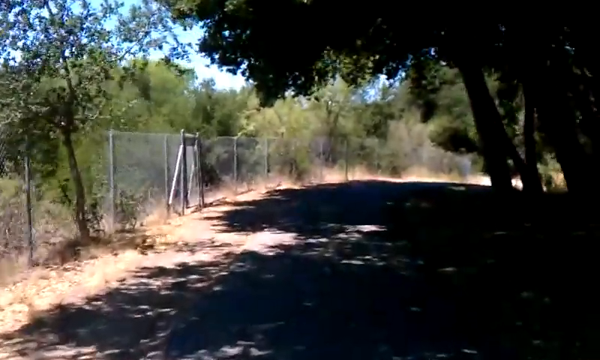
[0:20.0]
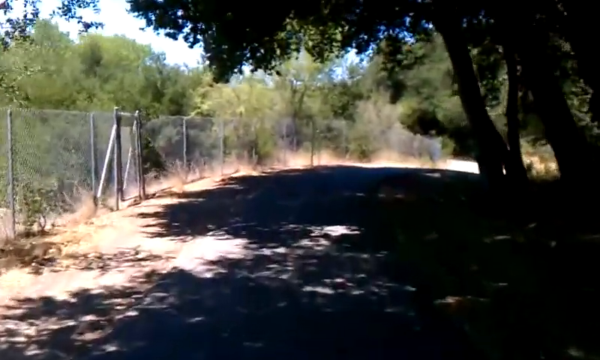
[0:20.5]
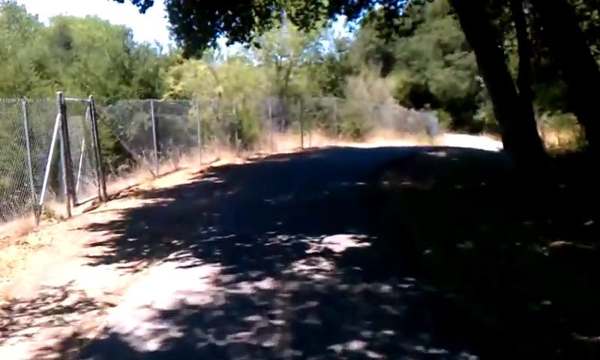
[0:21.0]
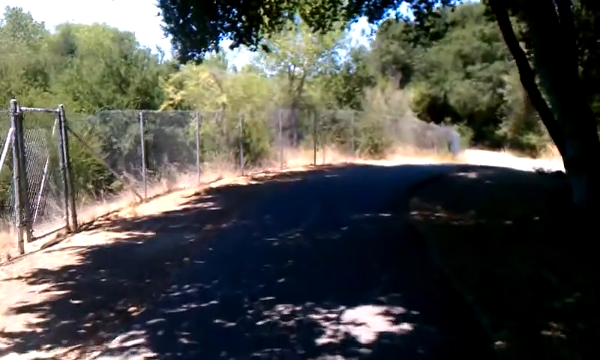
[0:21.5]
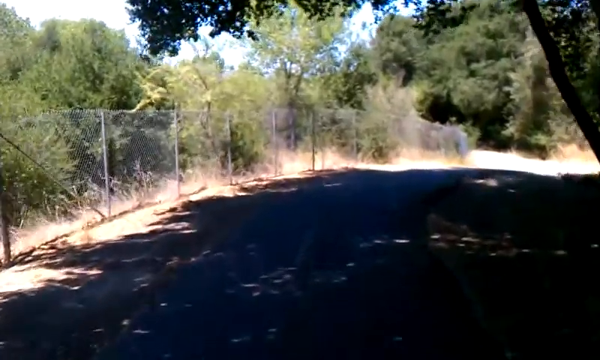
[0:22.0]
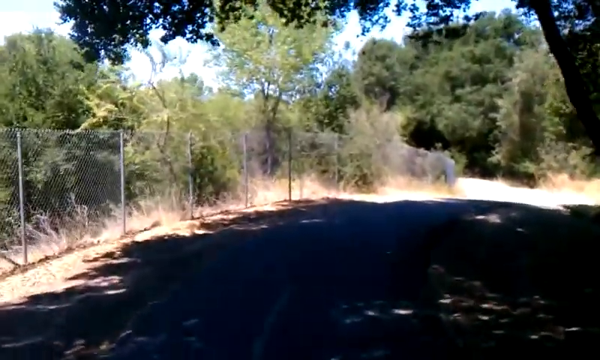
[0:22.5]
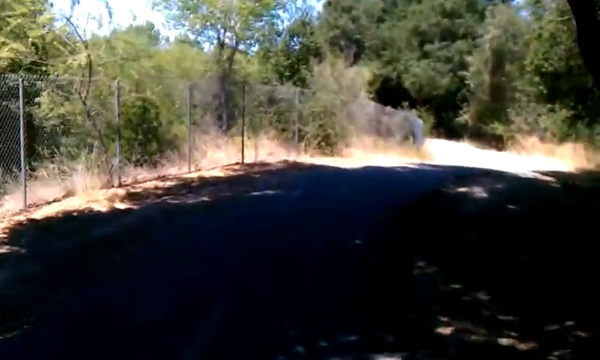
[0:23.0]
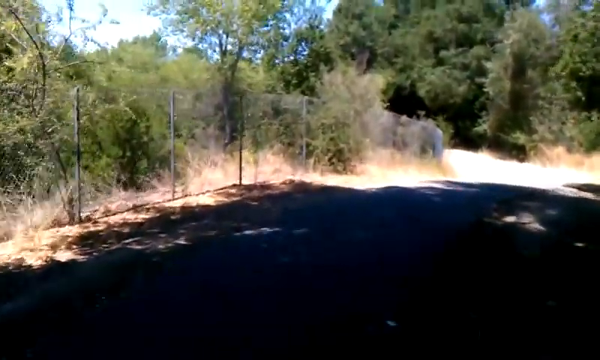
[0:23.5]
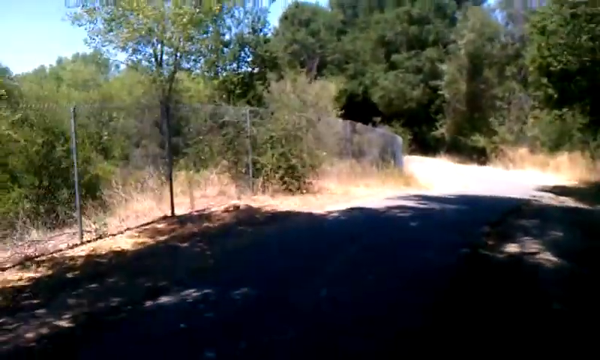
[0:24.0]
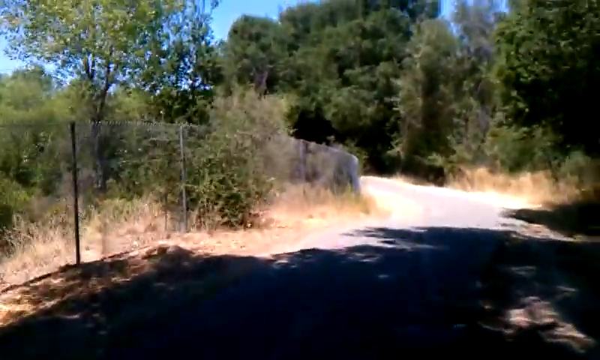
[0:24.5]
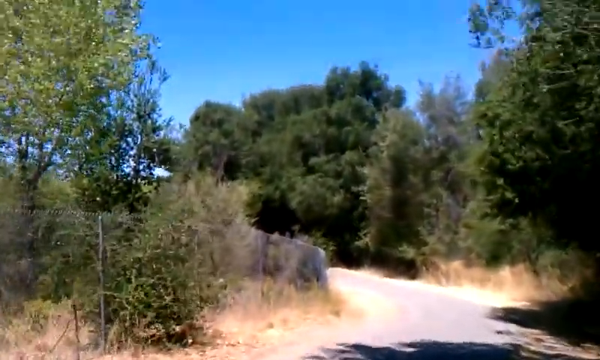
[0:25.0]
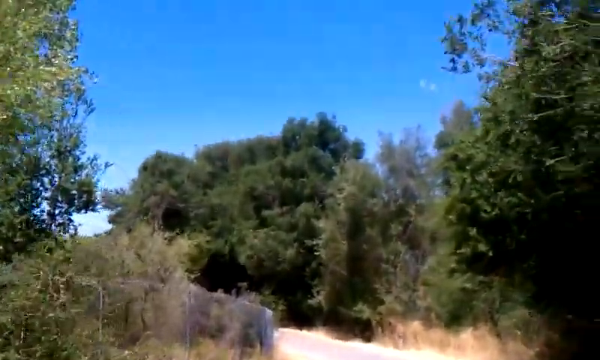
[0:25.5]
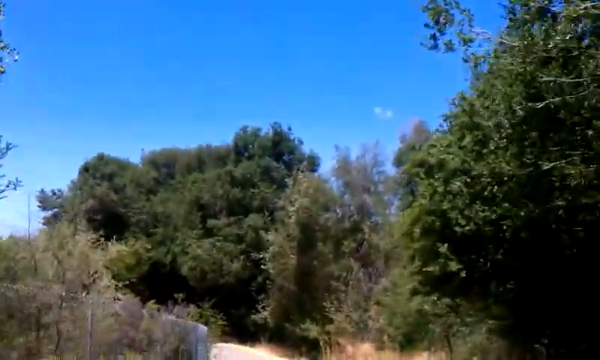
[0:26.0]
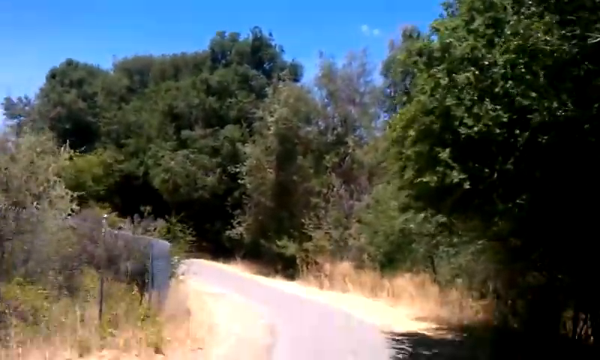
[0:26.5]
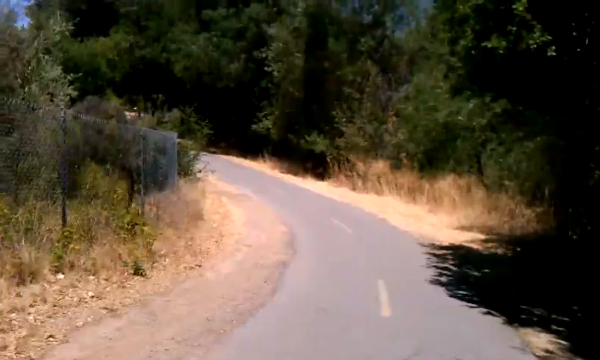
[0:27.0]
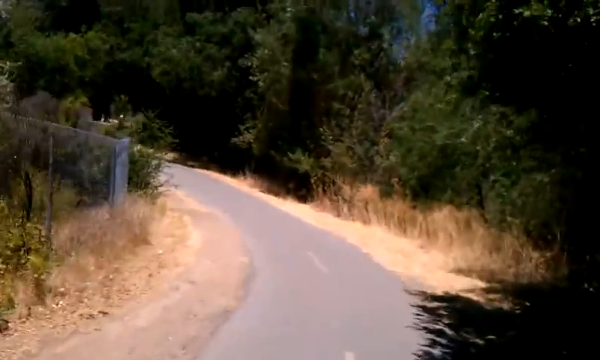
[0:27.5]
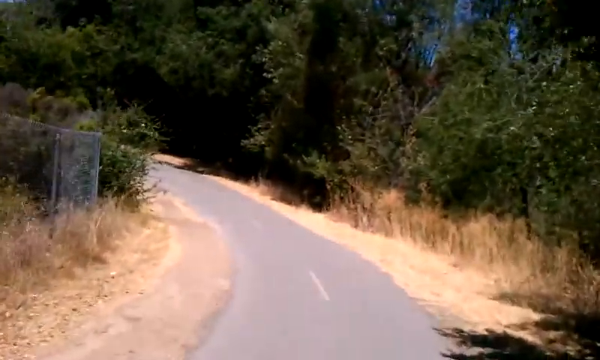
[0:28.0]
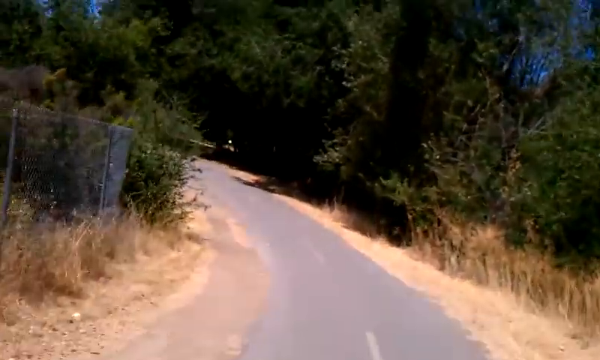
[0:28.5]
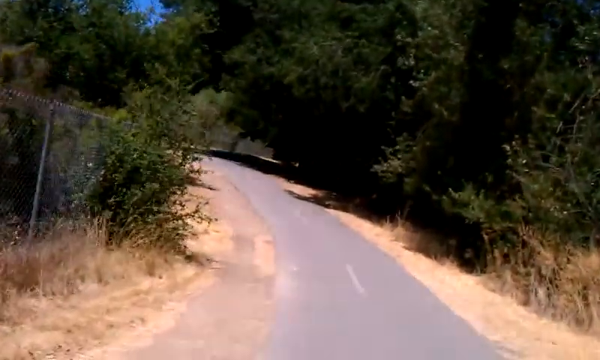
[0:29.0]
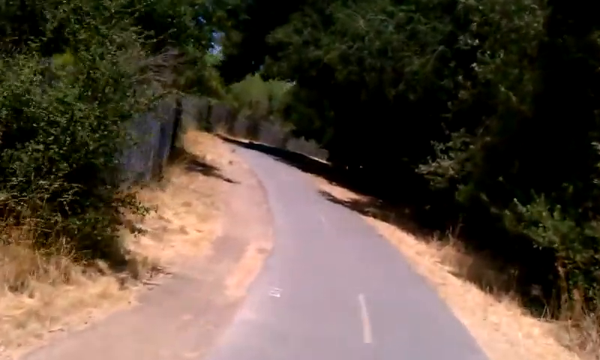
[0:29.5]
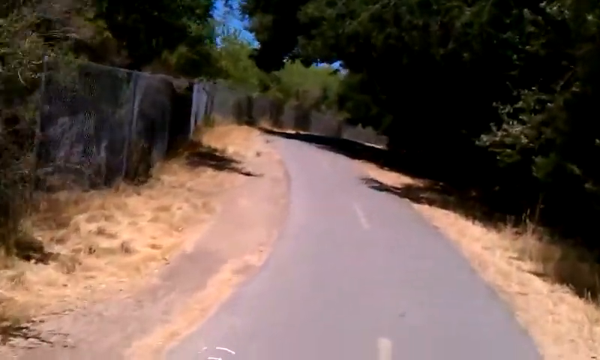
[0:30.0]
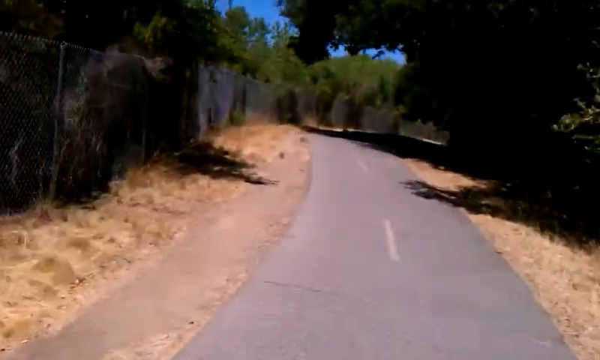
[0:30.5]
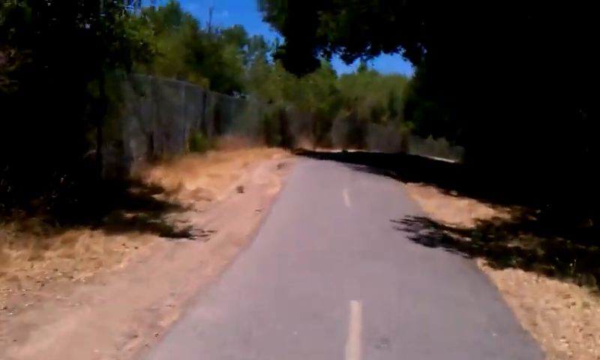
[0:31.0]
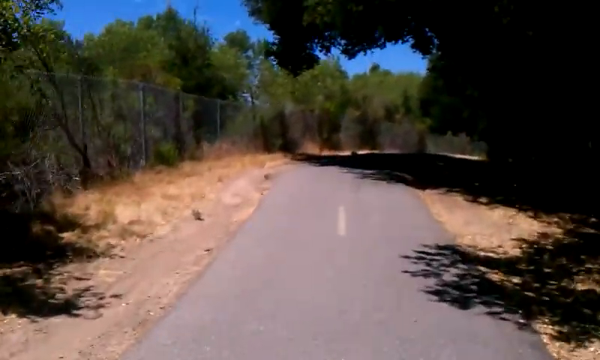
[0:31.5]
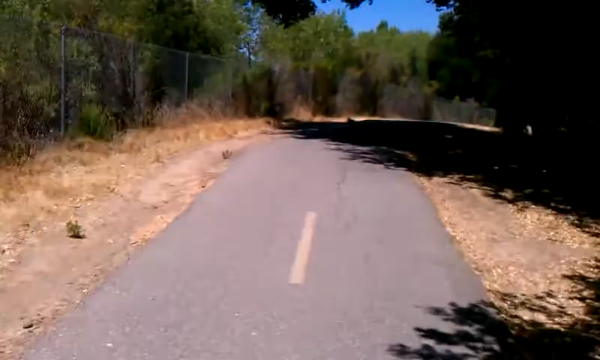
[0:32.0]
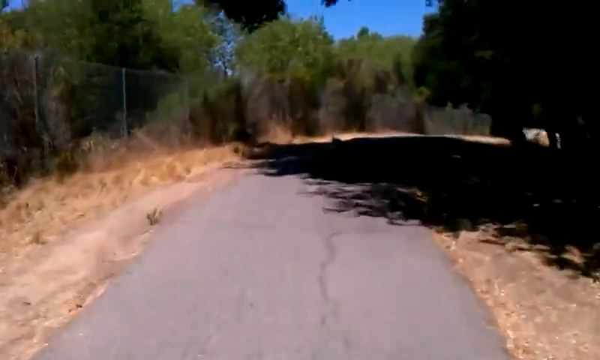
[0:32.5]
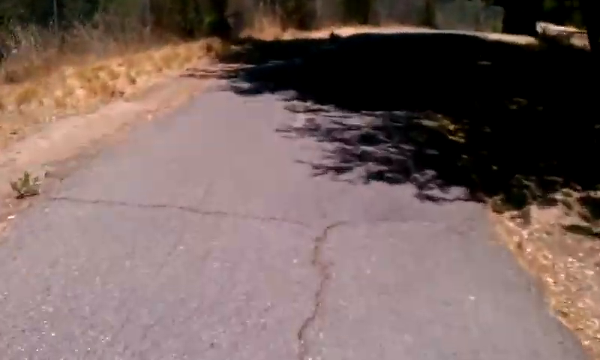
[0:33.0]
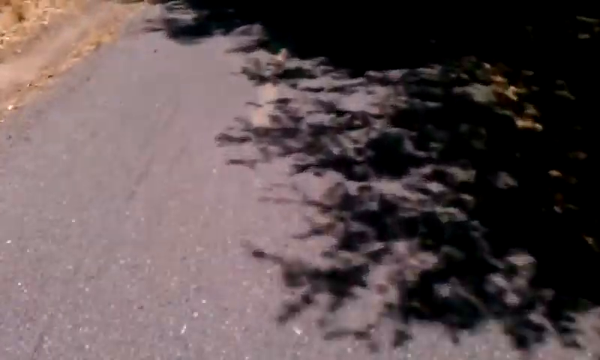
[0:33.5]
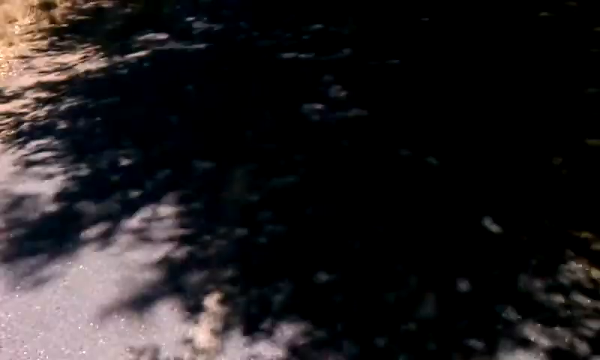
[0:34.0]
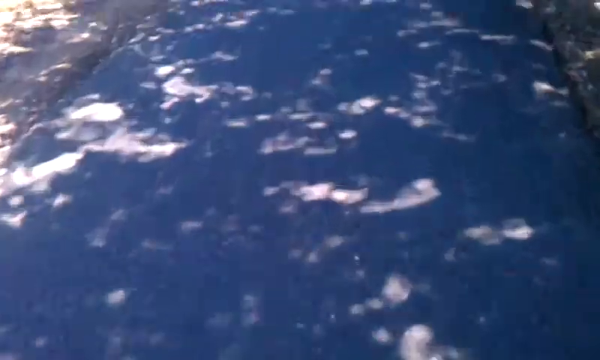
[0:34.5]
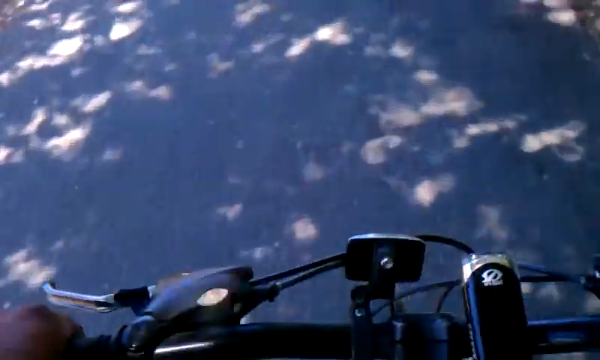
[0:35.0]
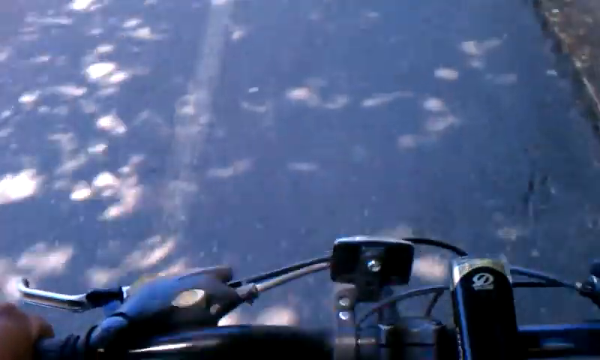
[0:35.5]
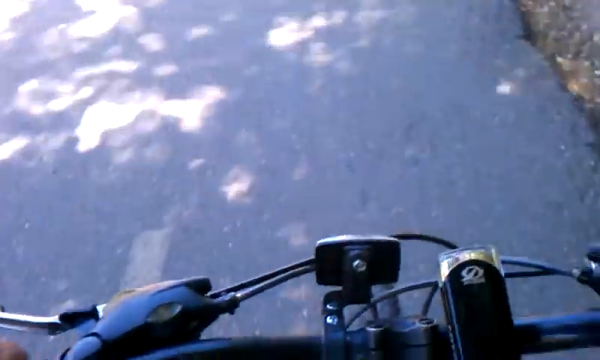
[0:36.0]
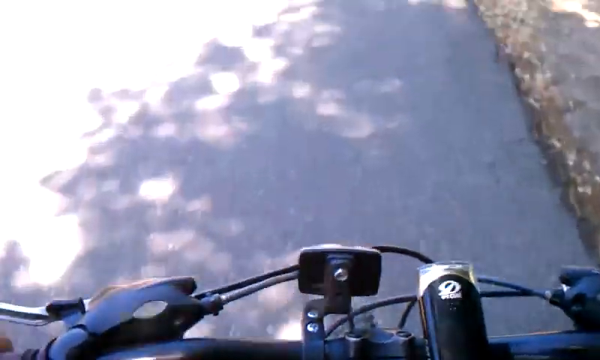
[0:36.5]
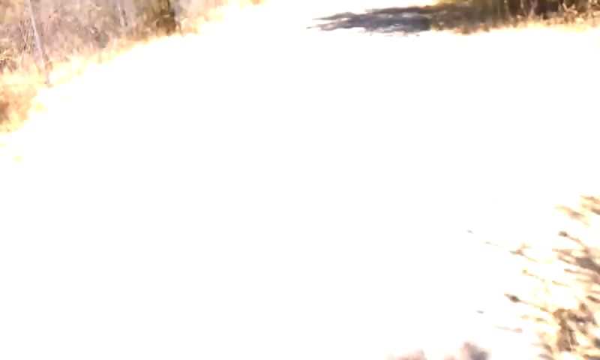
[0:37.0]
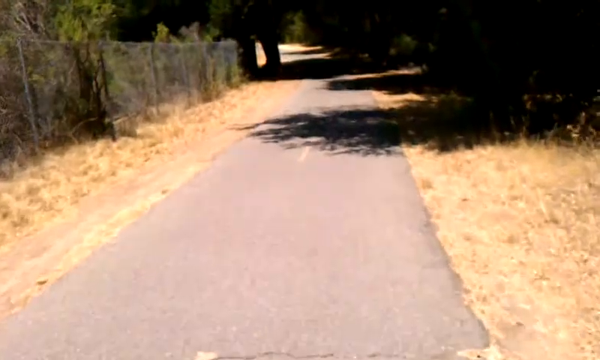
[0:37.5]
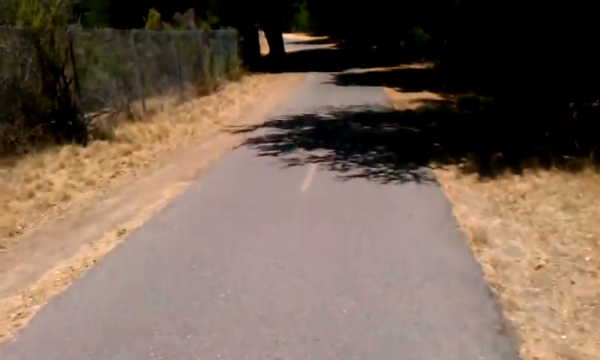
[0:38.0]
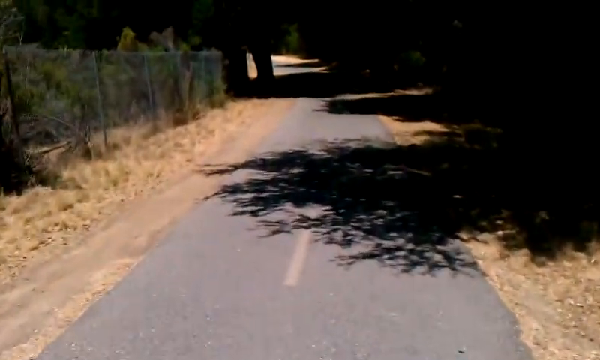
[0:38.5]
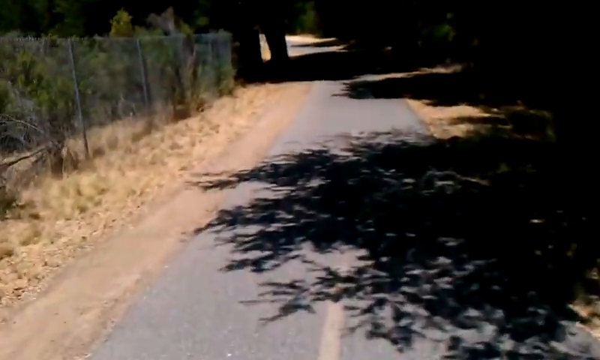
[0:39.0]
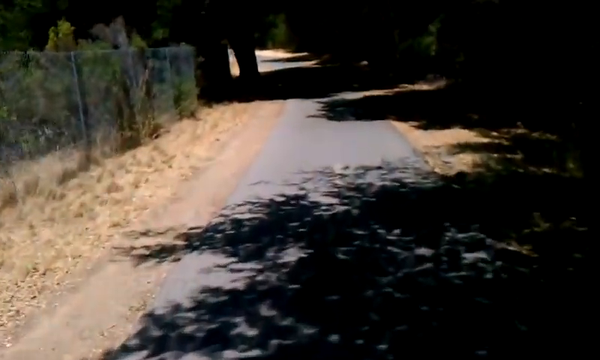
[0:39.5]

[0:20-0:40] The view is under the shade of trees on the right, with more trees on the left in the sunlight. A grayish metal chain-link fence runs on the left side, and what seems to be a grayish roadway is in the center. Moving along, there is an opening into the sunlight, with no clouds in the sky and dusty brown grass or weeds on either side of the road. More of the chain-link fence appears, along with the white lines and the person's black bicycle, including the handlebar and the back of the front light. The person rides down the middle of the gray road path, which has white lines in the middle separating the right from the left side.